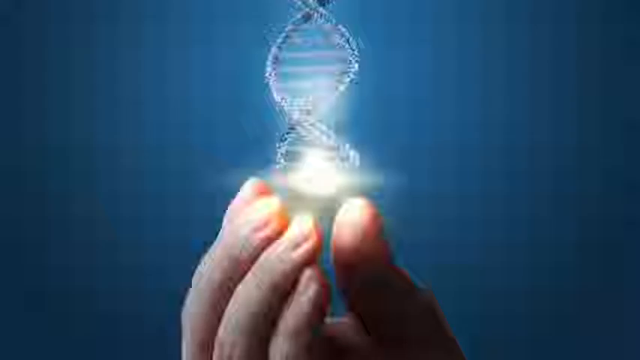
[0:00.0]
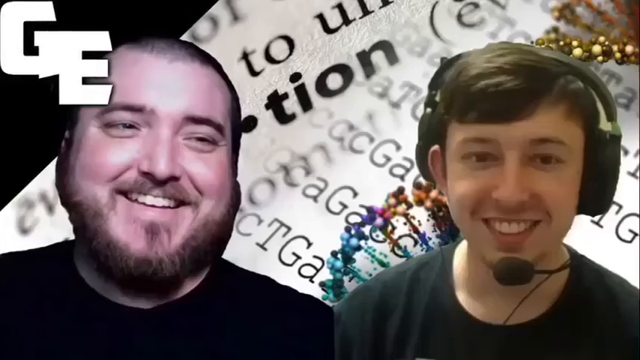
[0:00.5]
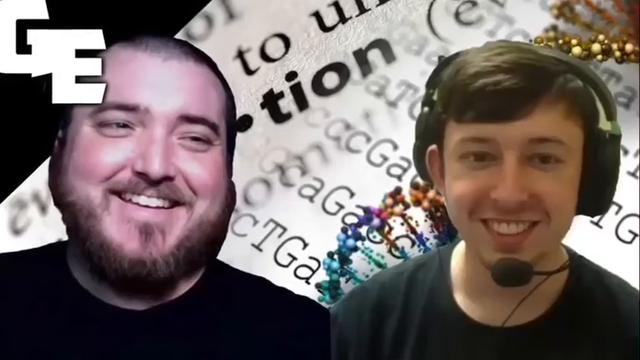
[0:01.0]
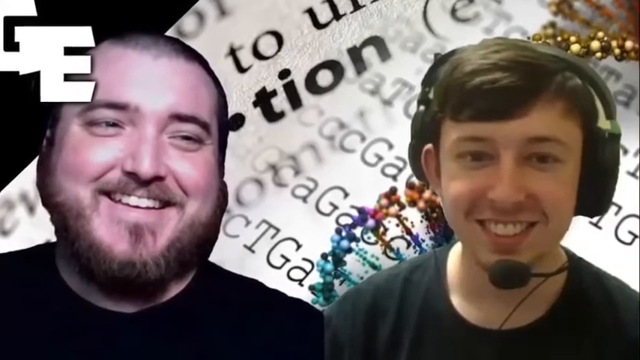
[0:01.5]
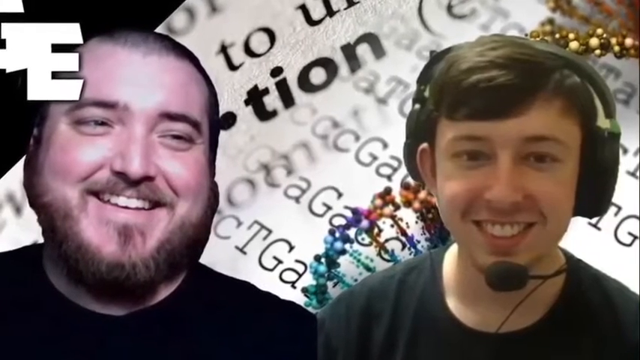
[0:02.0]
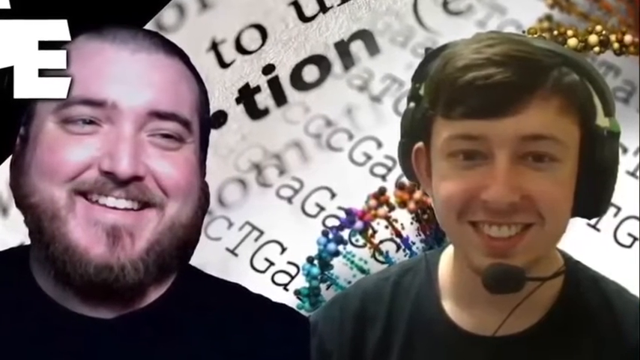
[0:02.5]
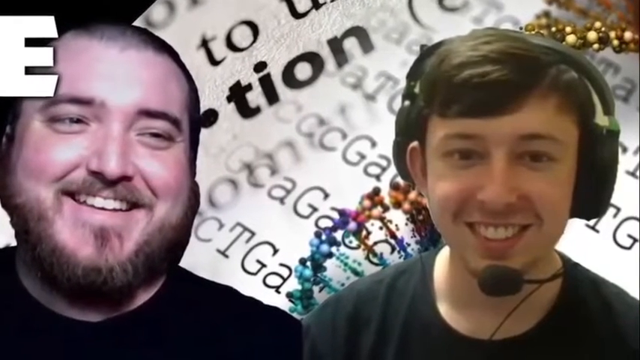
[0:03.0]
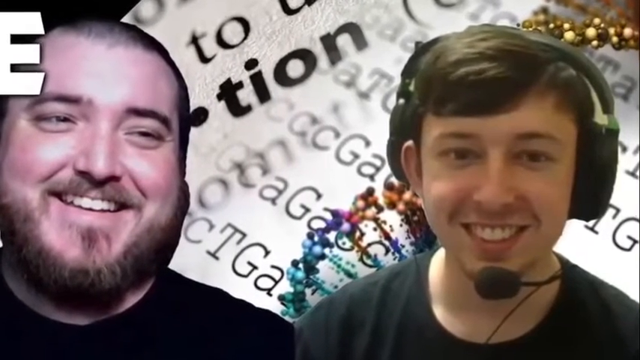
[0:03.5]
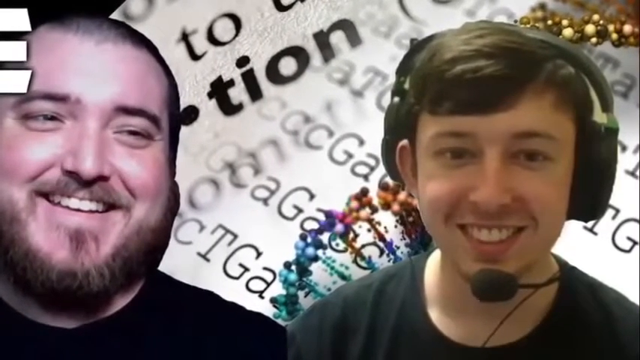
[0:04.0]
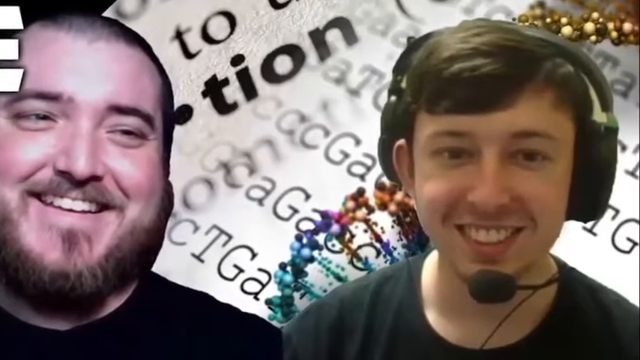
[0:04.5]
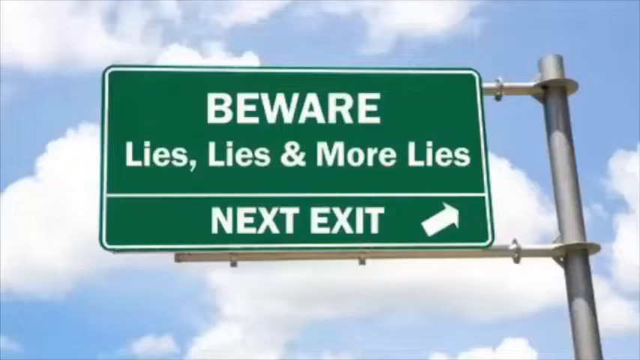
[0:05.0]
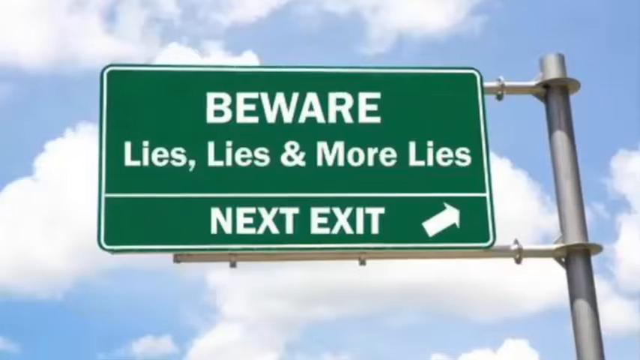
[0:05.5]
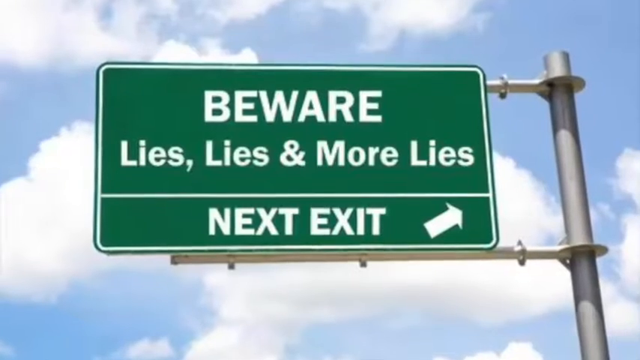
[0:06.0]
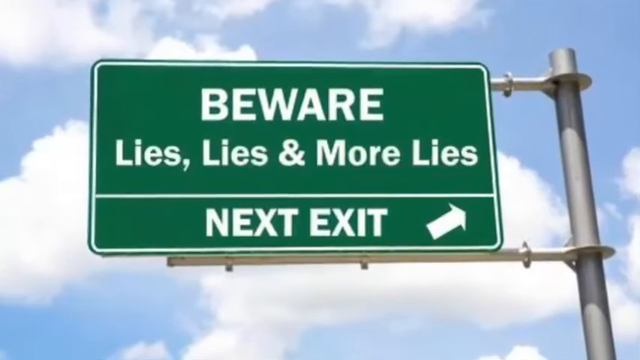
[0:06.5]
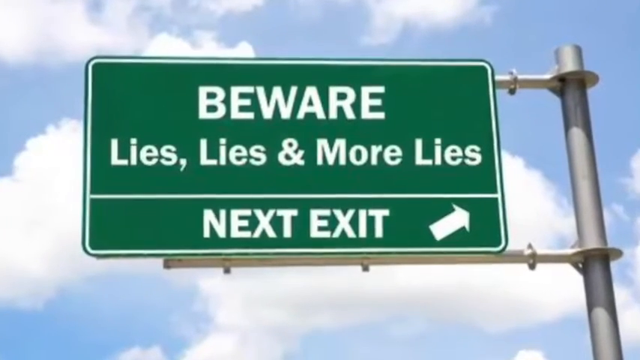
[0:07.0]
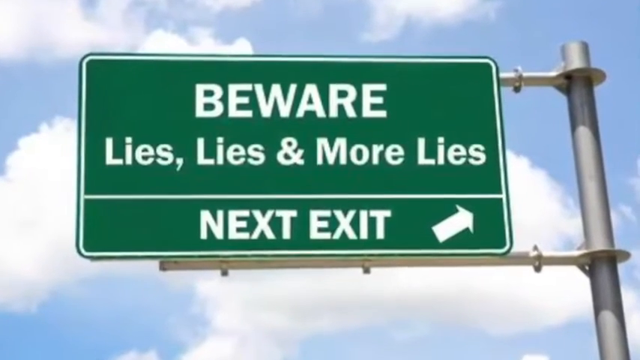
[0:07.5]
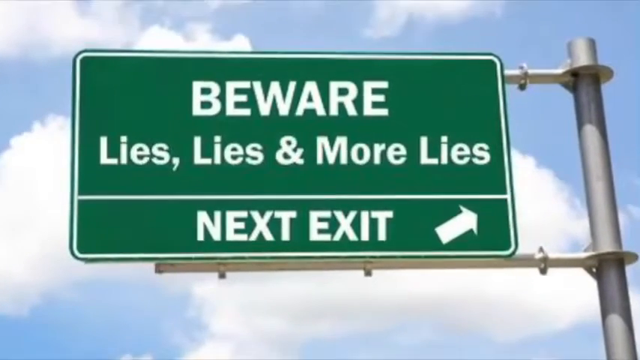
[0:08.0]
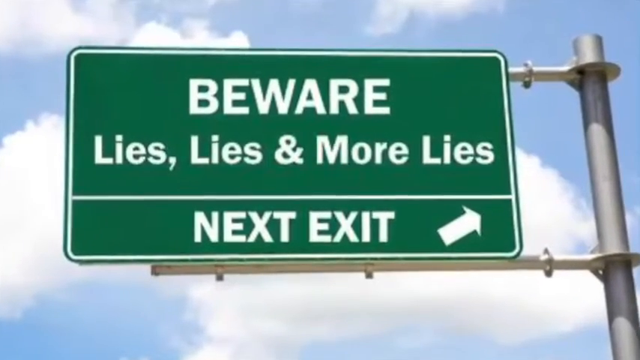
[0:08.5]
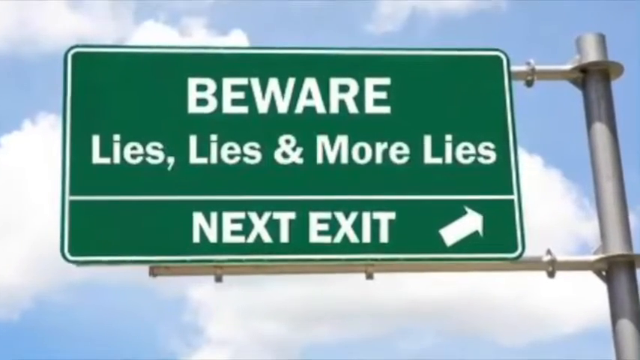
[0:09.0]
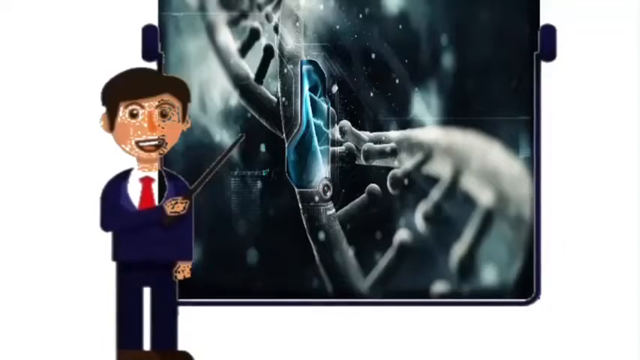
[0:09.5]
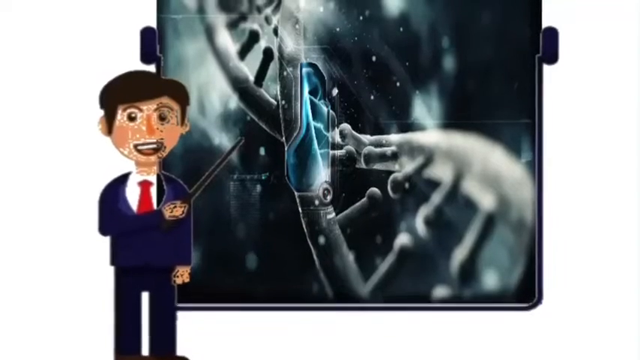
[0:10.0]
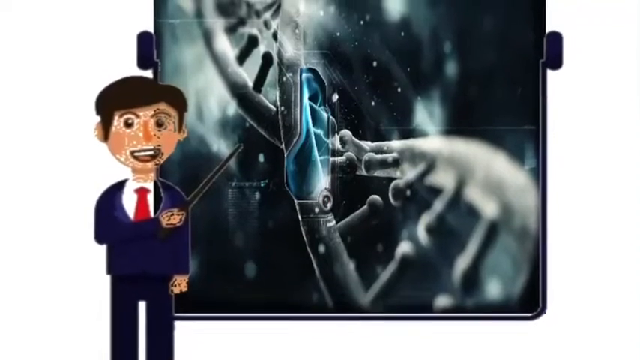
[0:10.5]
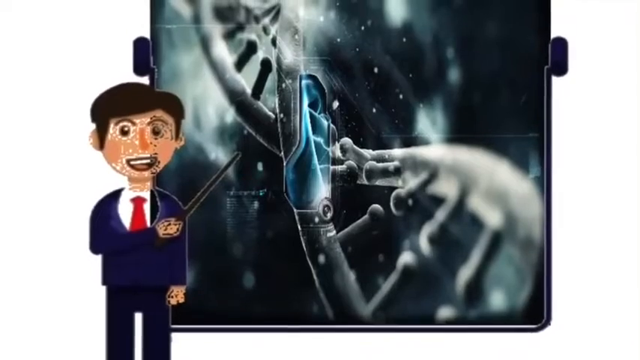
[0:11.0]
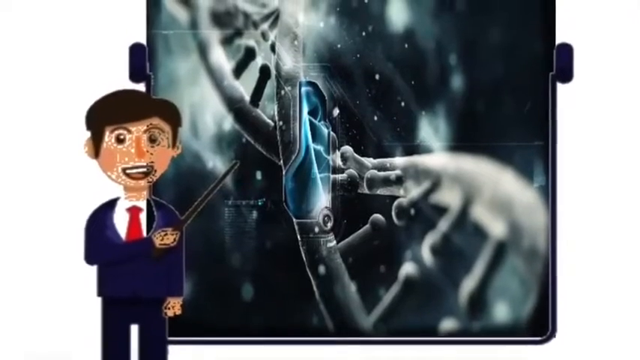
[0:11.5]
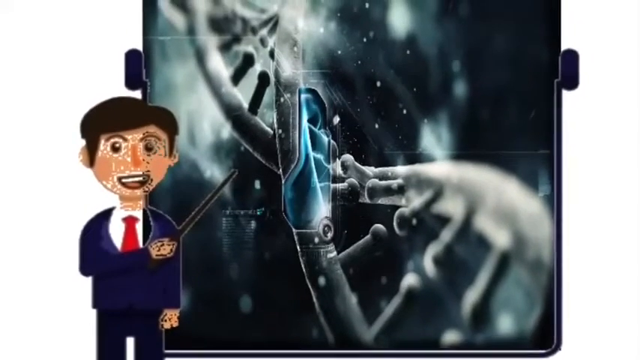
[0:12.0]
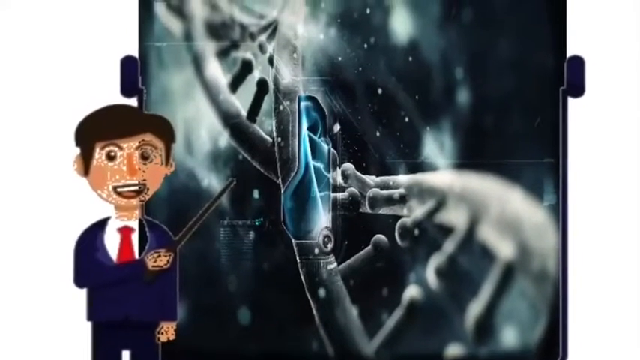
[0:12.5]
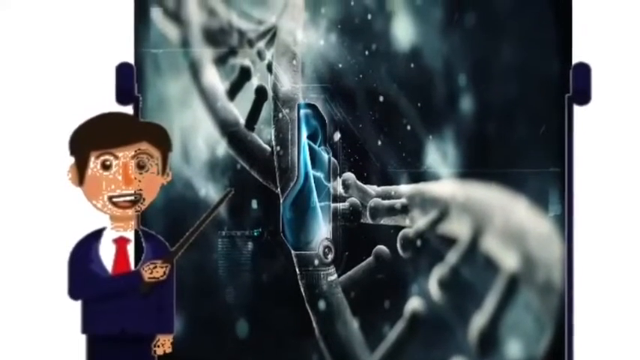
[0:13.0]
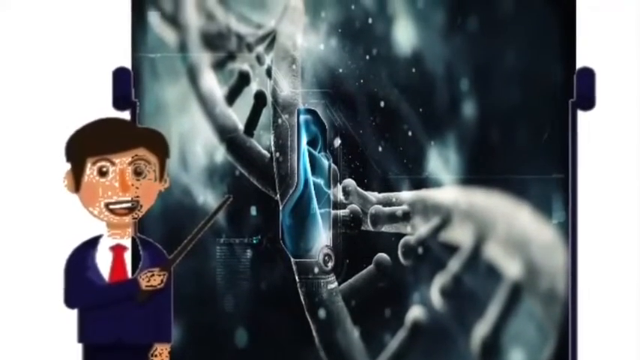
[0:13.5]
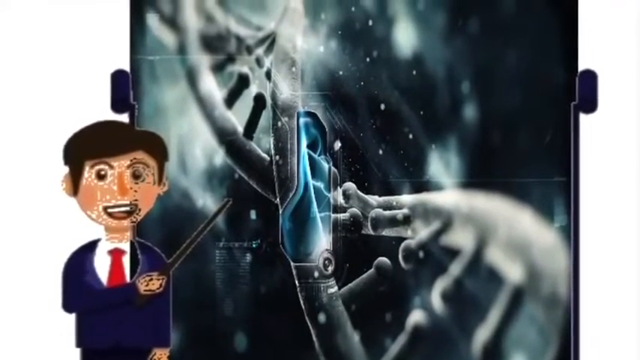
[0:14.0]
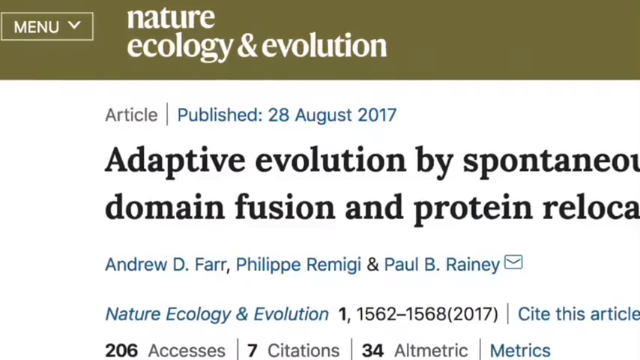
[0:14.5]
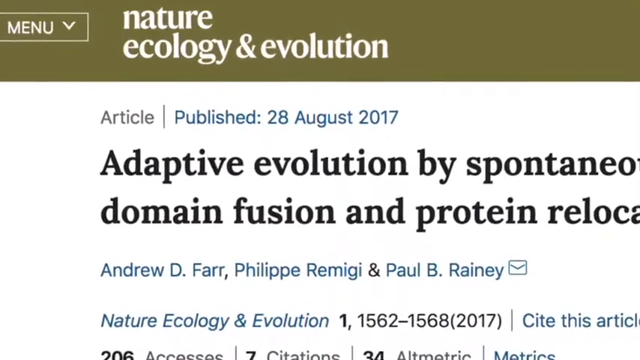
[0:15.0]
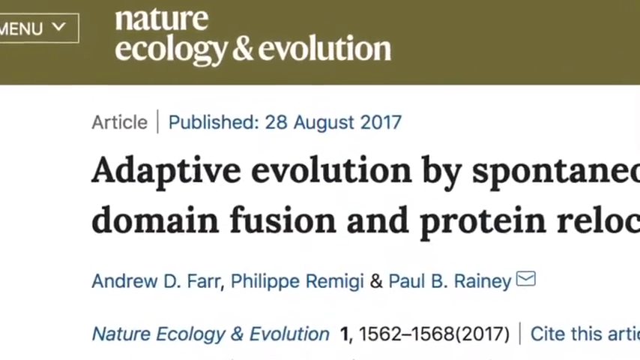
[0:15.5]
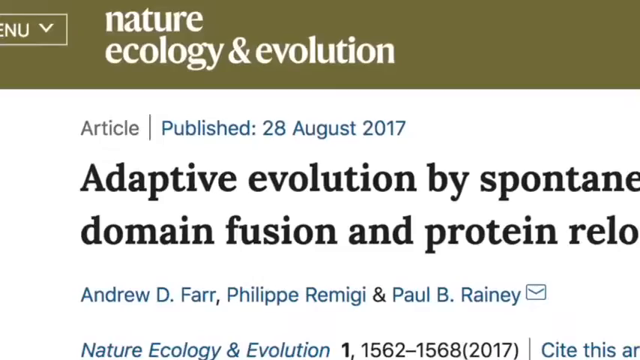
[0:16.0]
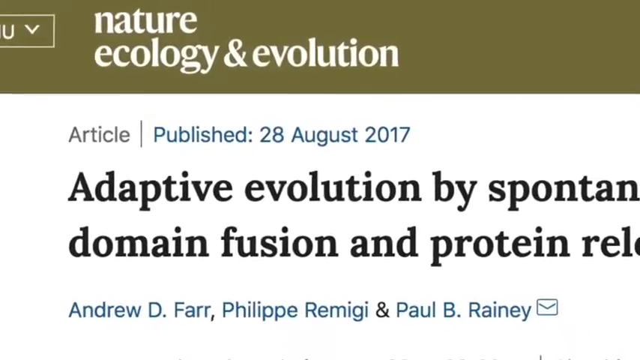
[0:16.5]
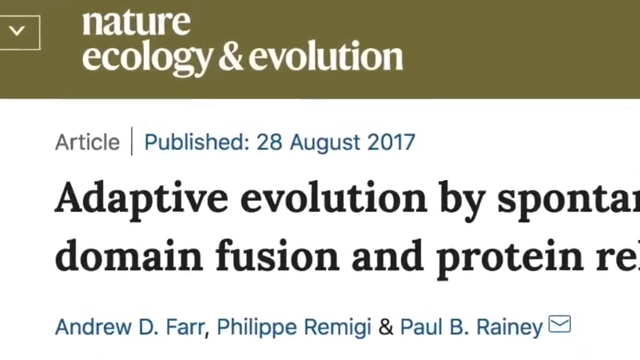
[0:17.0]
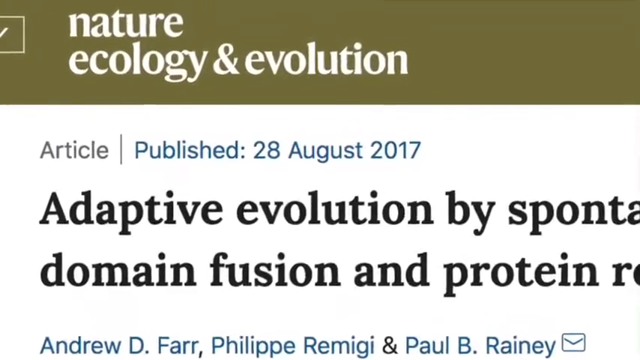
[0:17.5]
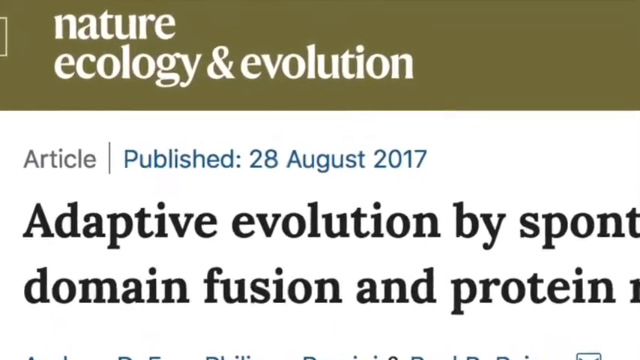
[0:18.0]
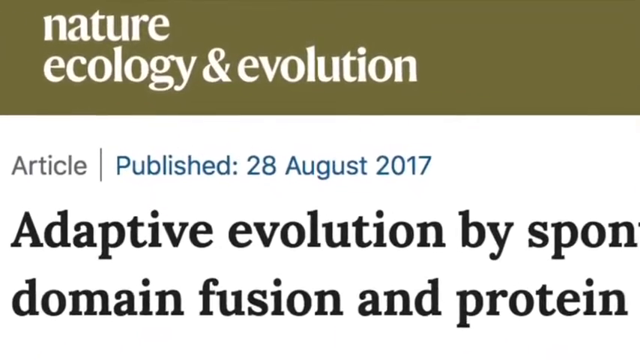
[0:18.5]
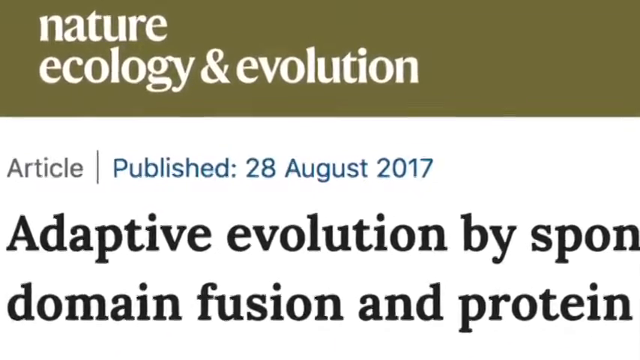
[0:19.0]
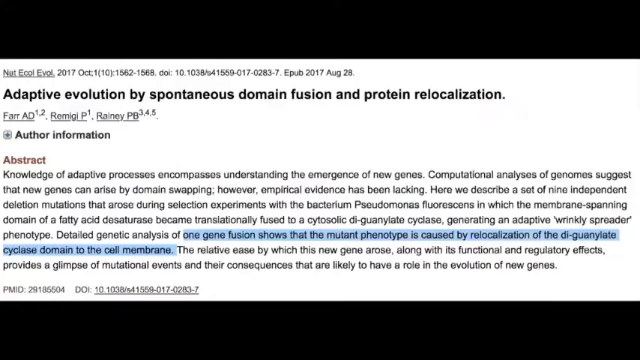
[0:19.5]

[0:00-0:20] A person's fingers and thumb are almost pinched together, and above them is a DNA swirl. Between the DNA swirl and the fingertips is a bright white light, set against a blue background. Next, two people appear. On the left is a man with a mustache, a beard and short buzzed hair, smiling brightly with his eyes slightly closed. To the right is a younger person with short brown hair wearing over-ear headphones; the right ear headphone is tucked behind their ear, and the headset has a microphone coming from the left to in front of their chin. Both wear black shirts, and in the background there is text superimposed on top of each other. The lens zooms in on the two men. Then a green street sign appears, outlined in white, with white text reading "Beware, lies, lies, and more lies." Below a horizontal line it says "Next exit," with a white arrow pointing to the right and up. The sign is held up by metal bars that go to a vertical bar, and behind it is a blue sky with white clouds. A cartoon figure holds a picture in their right hand and points it at a diagram behind them that looks like a DNA spiral. Next comes a web article: a brown banner at the top reads "nature ecology and evolution," and below it, on a white page, it says "article," a vertical line, and "published 28 august 2017." The title begins "adaptive evolution of spontaneous" before the page cuts off, and the next line reads "domain fusion and protein" before the screen cuts off in the middle of the words. Some names are underneath, and there is a menu button in the upper left corner. The angle zooms in.